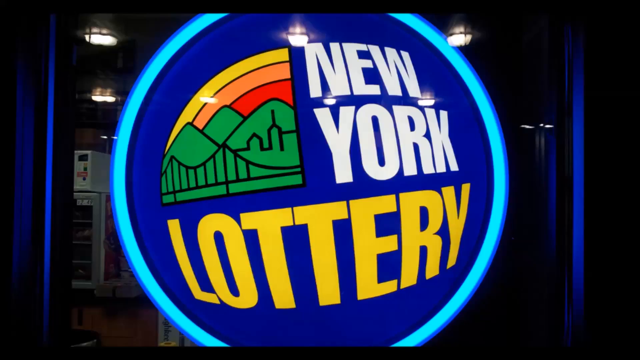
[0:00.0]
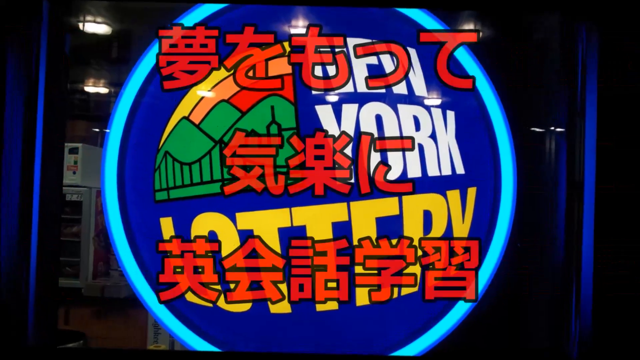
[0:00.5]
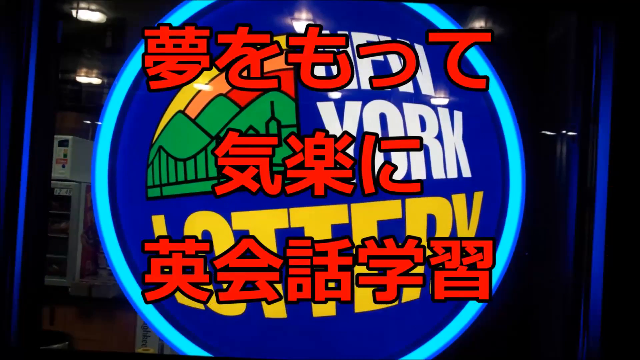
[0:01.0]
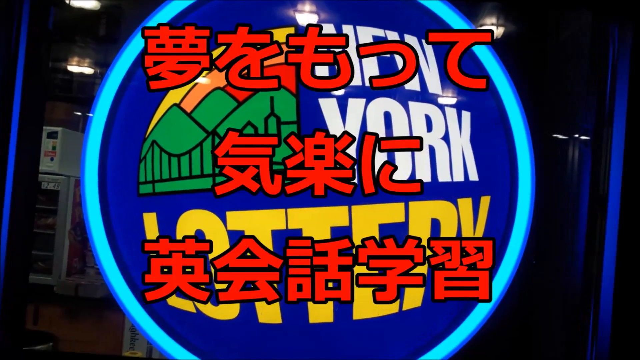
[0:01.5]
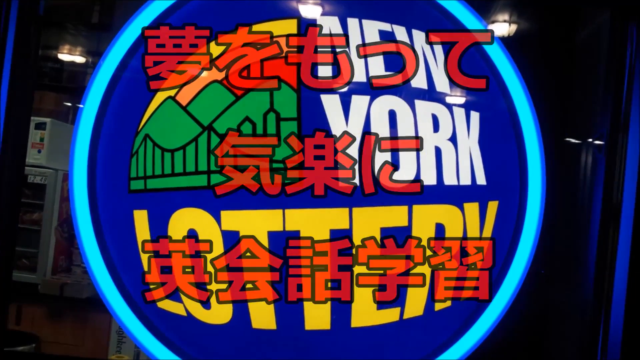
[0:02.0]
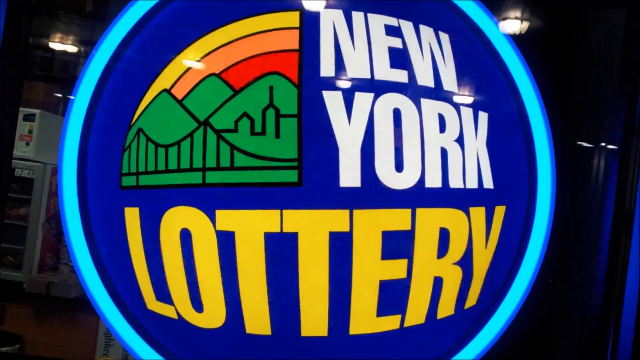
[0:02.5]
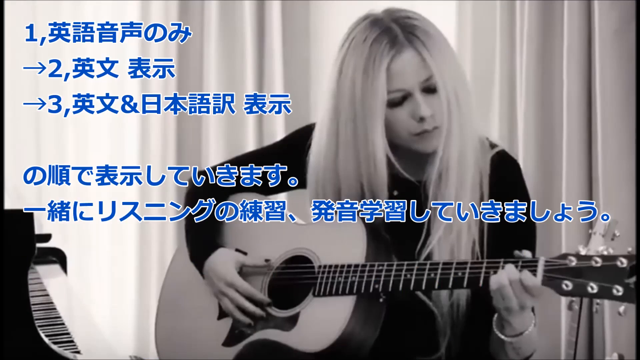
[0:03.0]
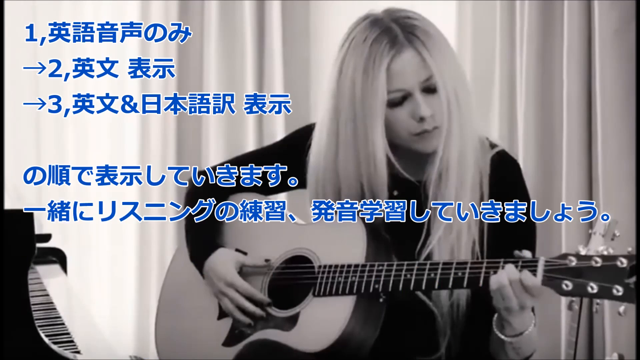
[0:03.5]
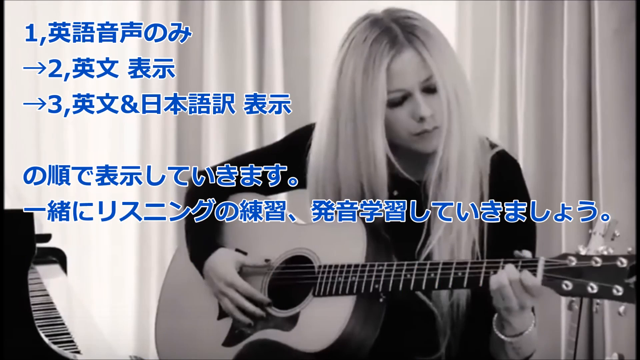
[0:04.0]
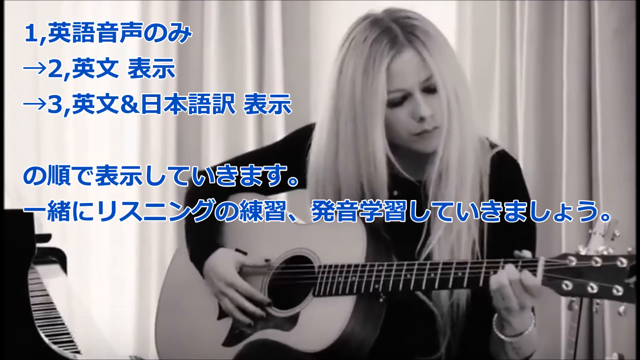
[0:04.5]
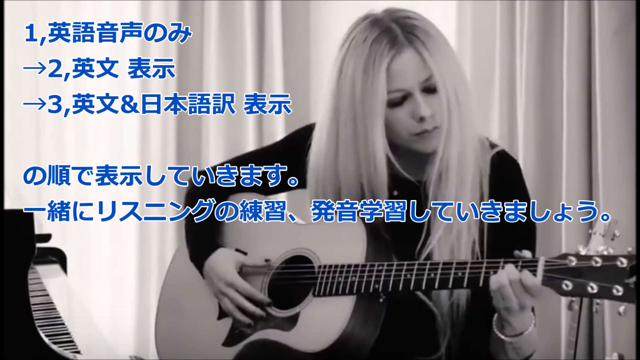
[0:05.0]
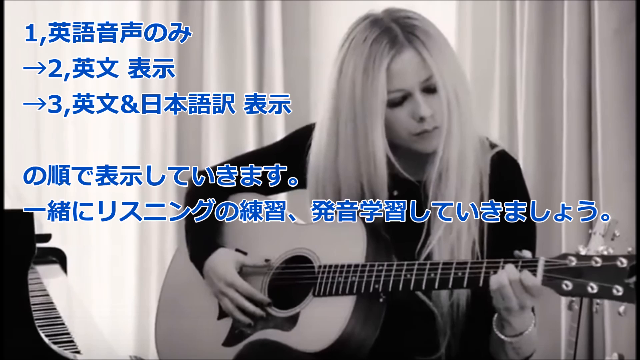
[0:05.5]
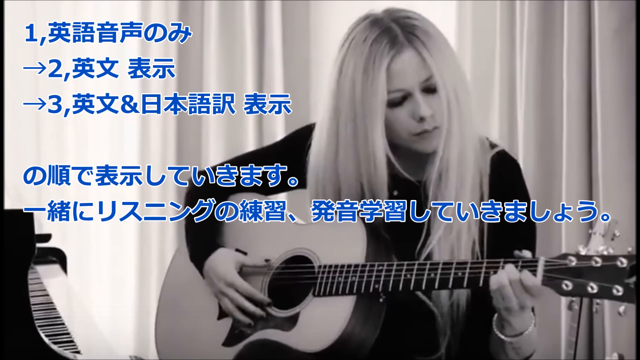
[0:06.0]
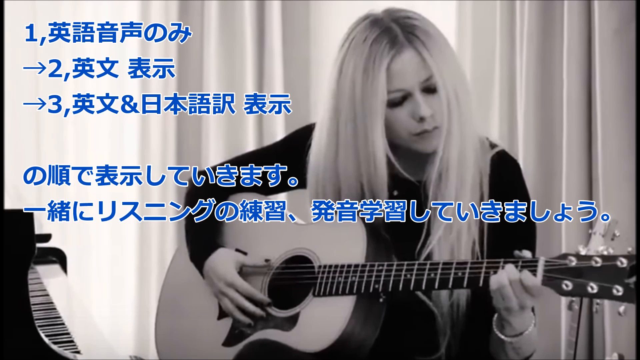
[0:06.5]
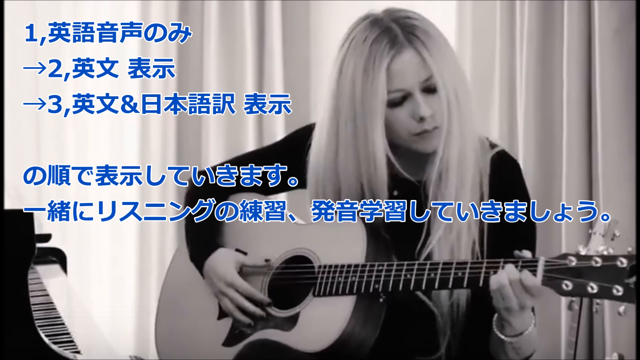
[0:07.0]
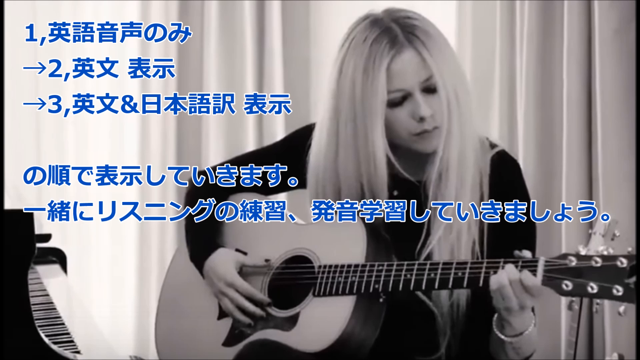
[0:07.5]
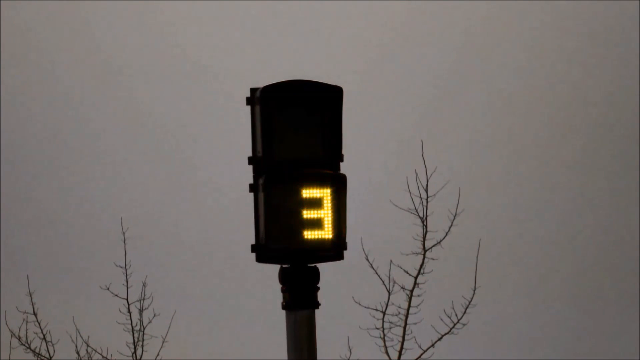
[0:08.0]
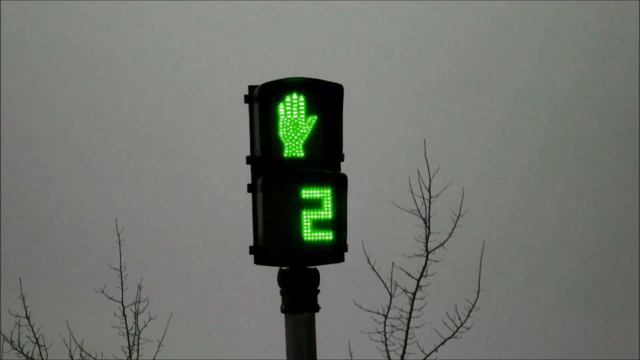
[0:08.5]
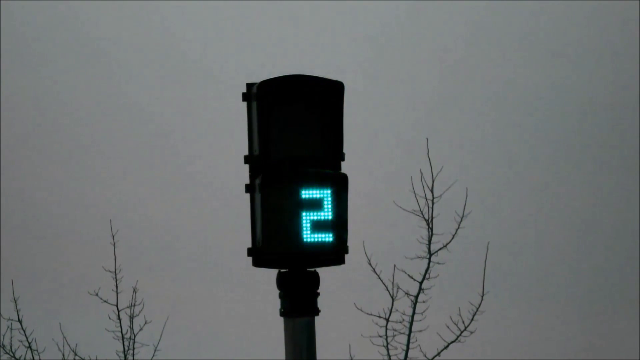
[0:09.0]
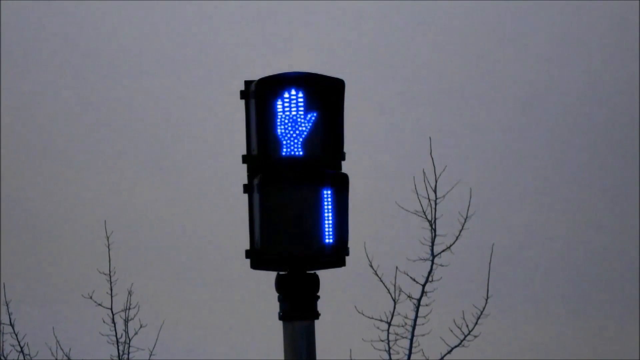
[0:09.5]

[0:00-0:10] The New York Lottery name and logo appear inside an orb with a blue background, a lighter blue border, and another thinner blue border. The setting appears to be some sort of studio, possibly; a computer is visible, along with three ceiling lights. Text in a language other than English appears on the screen. Next comes a still shot of Avril Lavigne playing an acoustic guitar, with the keys of a piano visible to her right. She is sitting in front of a curtain. Text in a language other than English is overlaid on the photo, along with the numbers one, two and three, with arrows next to the two and the three pointing right. Then a pedestrian walk sign, like one on a street corner, appears in countdown mode. It is at three and counts down to two and one, and a stop hand appears. Trees behind the walk sign appear to be bare, with no leaves.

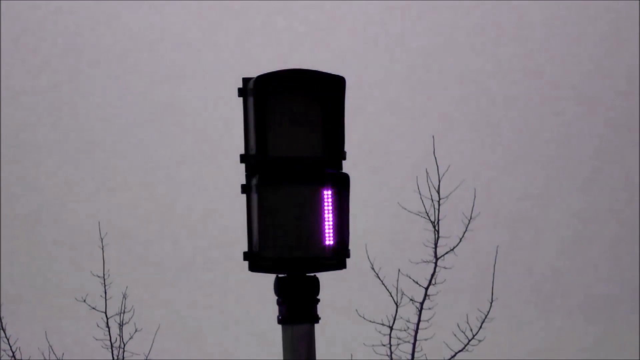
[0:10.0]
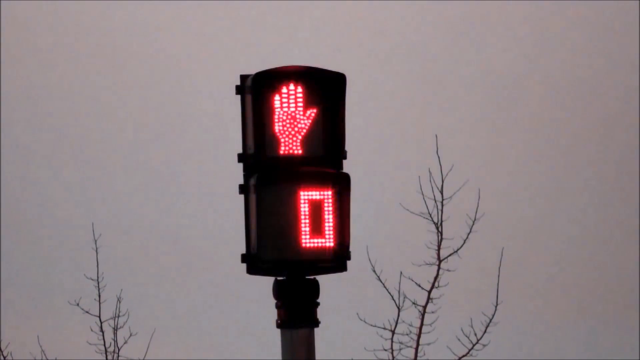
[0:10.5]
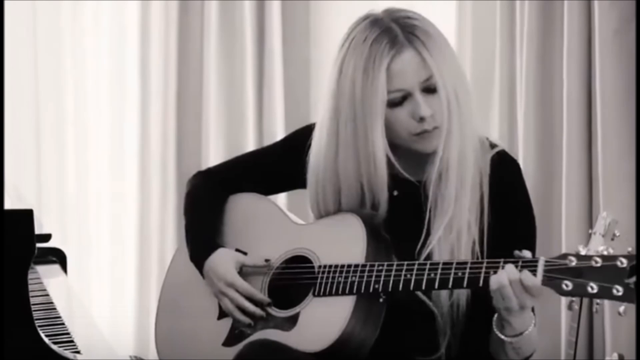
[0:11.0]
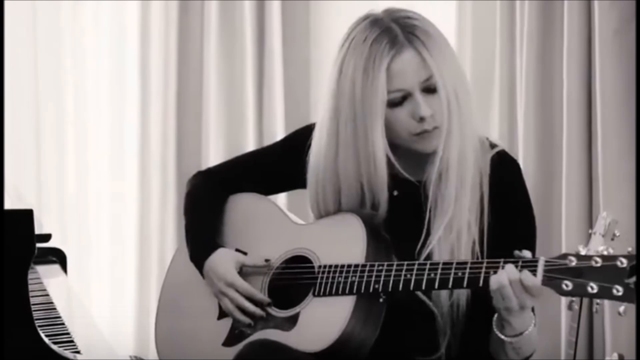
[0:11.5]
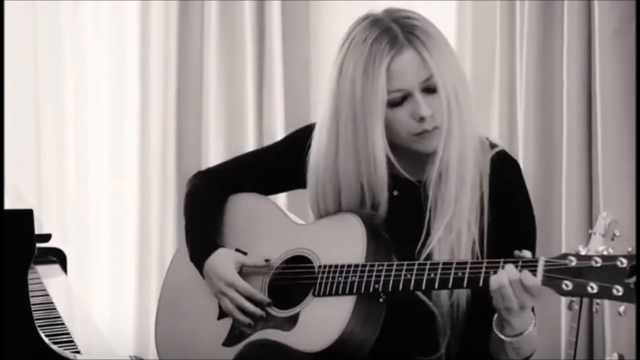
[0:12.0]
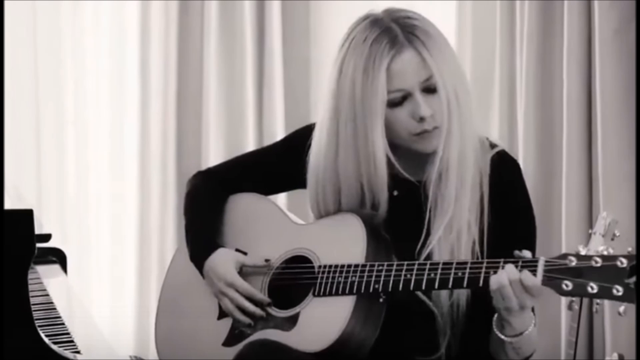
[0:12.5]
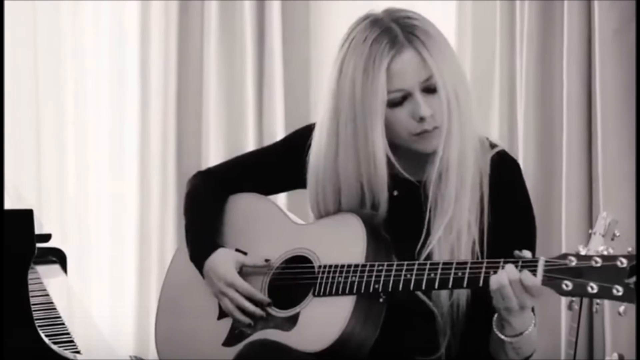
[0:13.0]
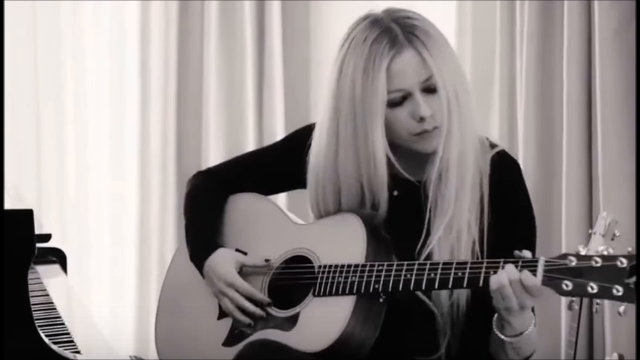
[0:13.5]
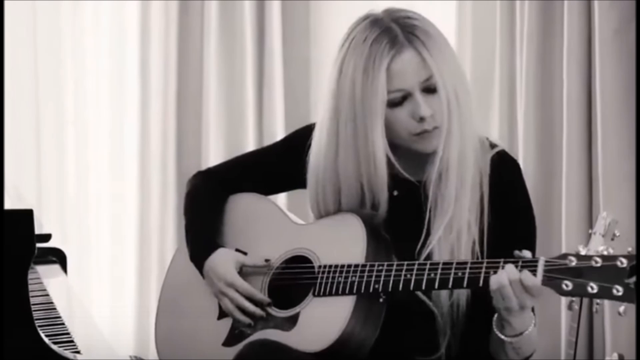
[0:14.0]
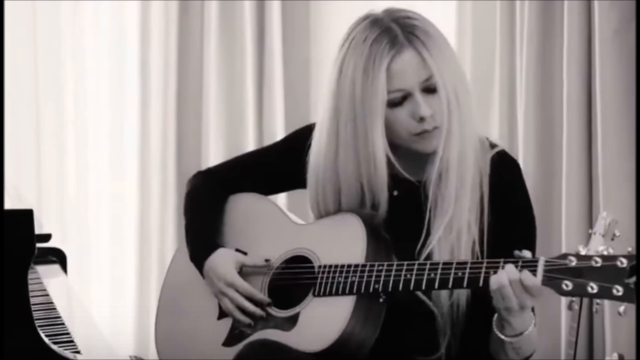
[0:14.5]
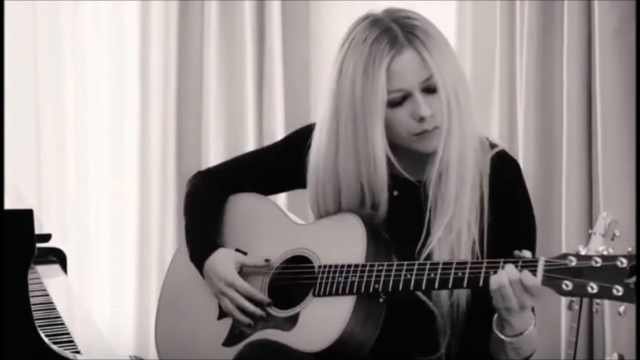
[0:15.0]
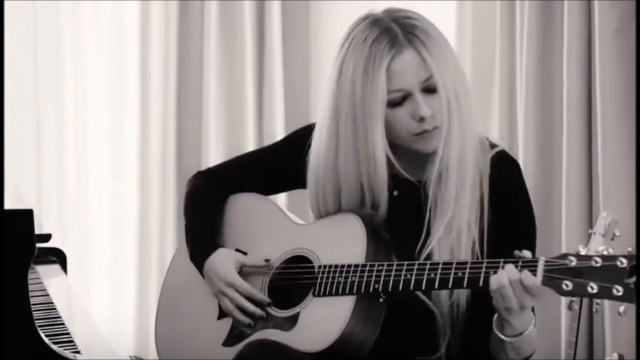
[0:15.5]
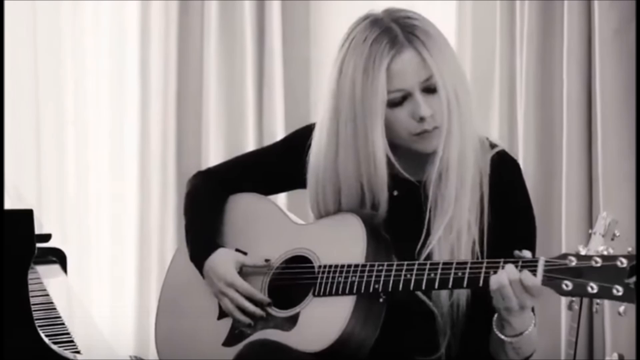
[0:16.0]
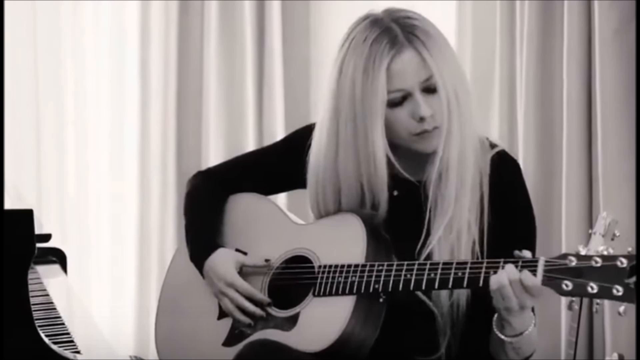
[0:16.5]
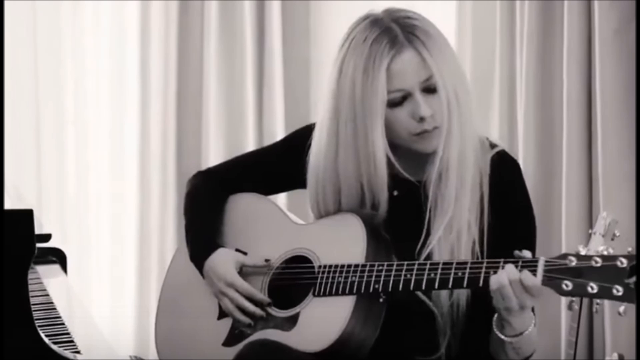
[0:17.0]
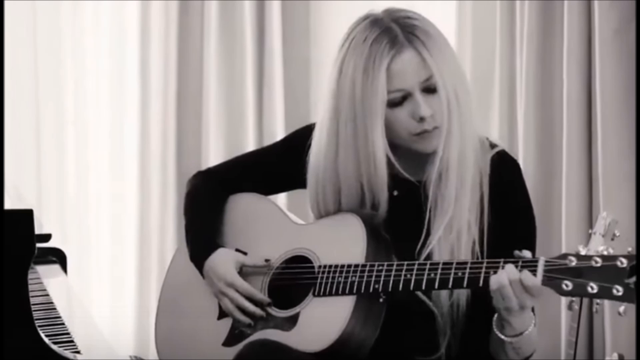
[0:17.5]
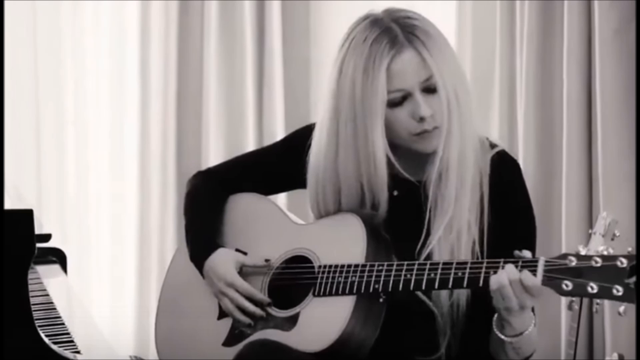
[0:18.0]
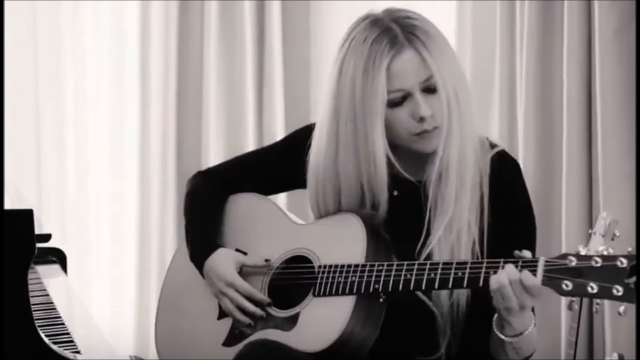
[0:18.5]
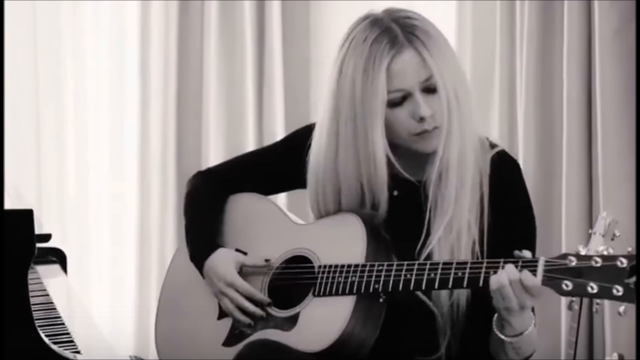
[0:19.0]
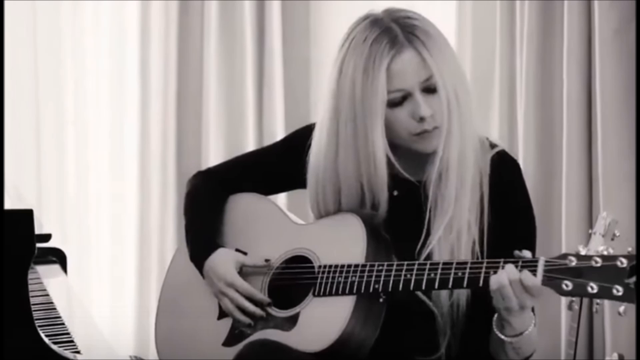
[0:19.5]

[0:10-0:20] A pedestrian walk sign of the kind found at a vehicle intersection counts down from two. It is green on two, turns blue on one, and then shows a hand in stop mode. The housing of the walk/don't walk sign is black, and the head of the sign sits on a black pole. Bare trees with no leaves are visible behind the sign, and the sky appears gray and hazy. The video returns to a still shot of Avril Lavigne playing an acoustic guitar. She wears a black long-sleeve shirt. To her right is a piano keyboard with ivory and black keys visible, and its cover is in the up position. Curtains behind her appear to be sheer and see-through. She is looking at the guitar.